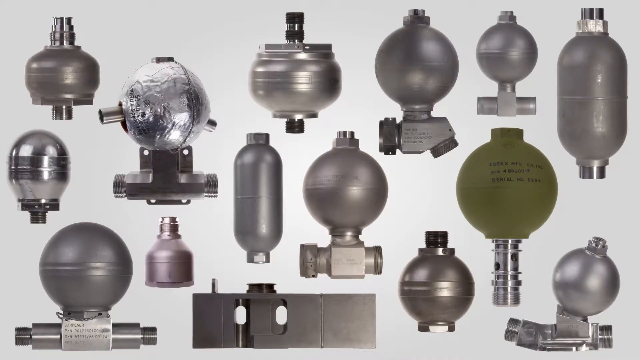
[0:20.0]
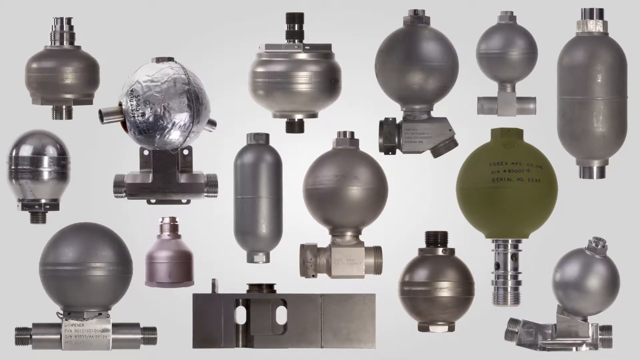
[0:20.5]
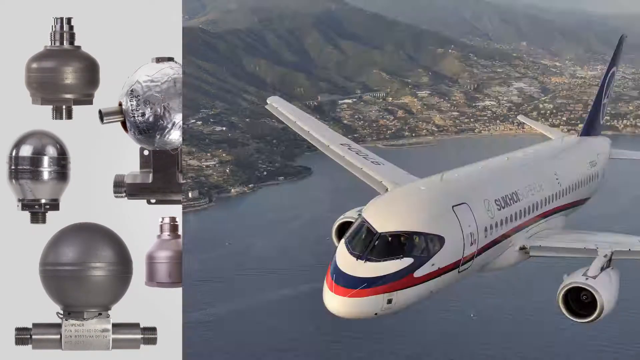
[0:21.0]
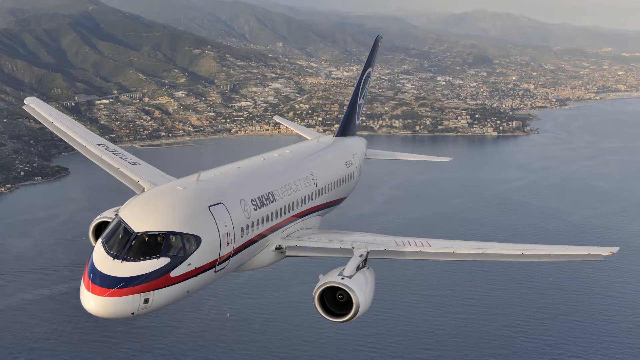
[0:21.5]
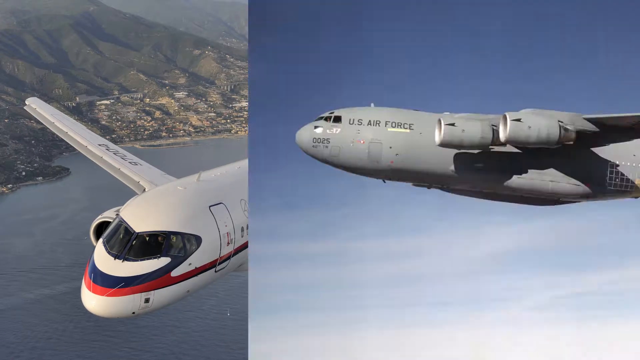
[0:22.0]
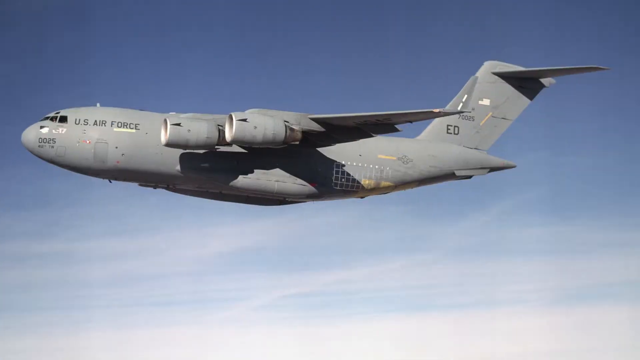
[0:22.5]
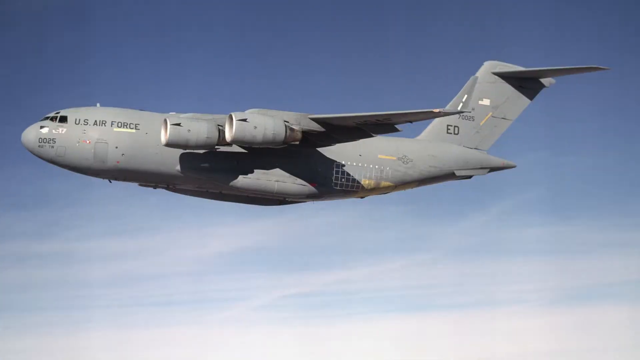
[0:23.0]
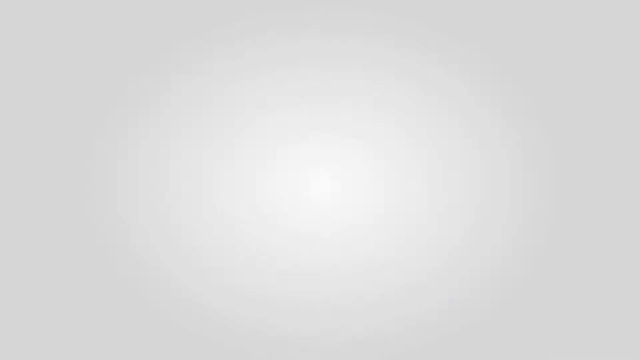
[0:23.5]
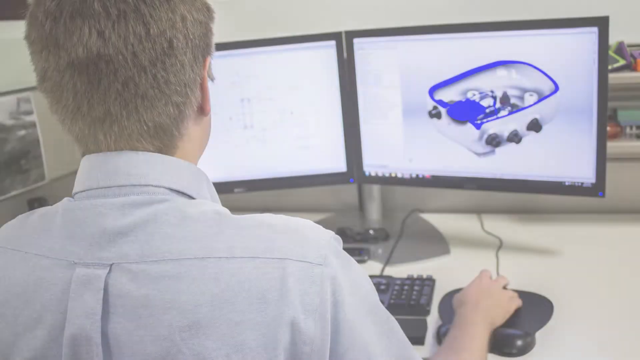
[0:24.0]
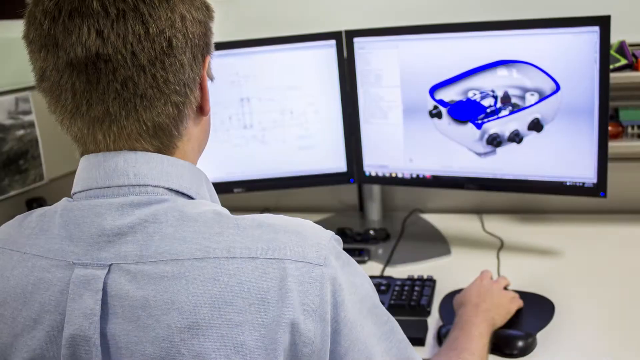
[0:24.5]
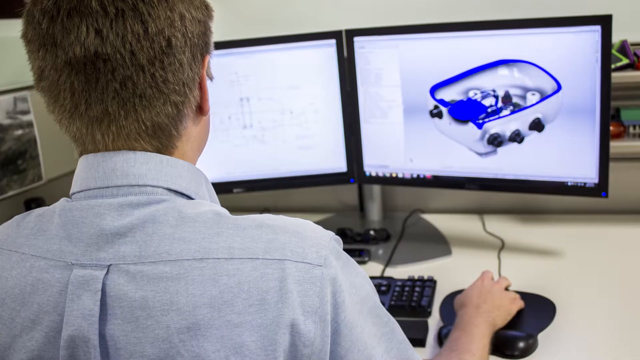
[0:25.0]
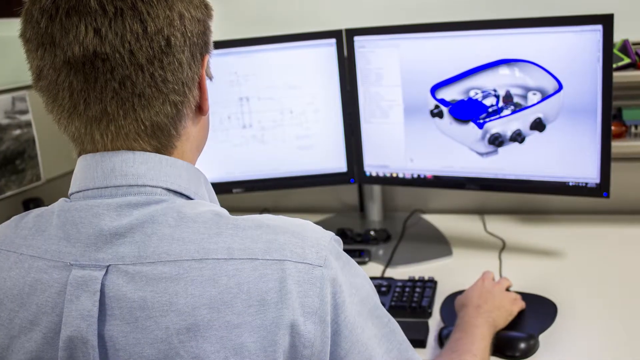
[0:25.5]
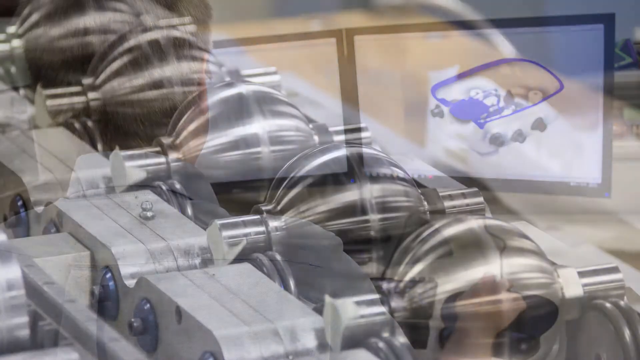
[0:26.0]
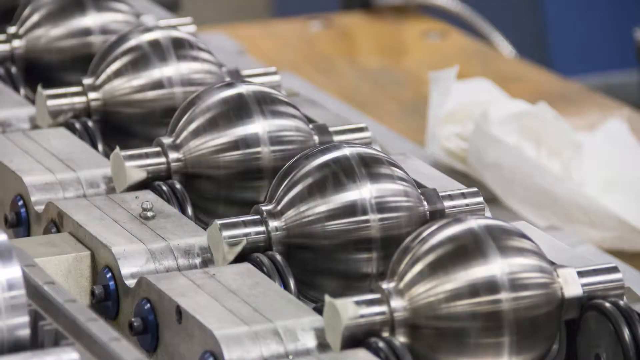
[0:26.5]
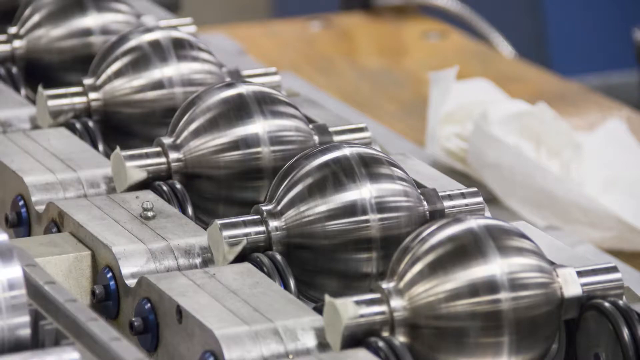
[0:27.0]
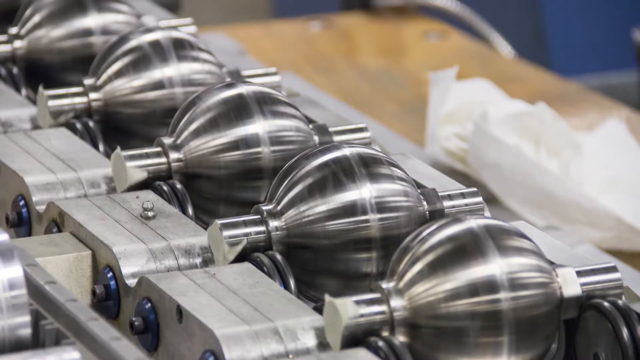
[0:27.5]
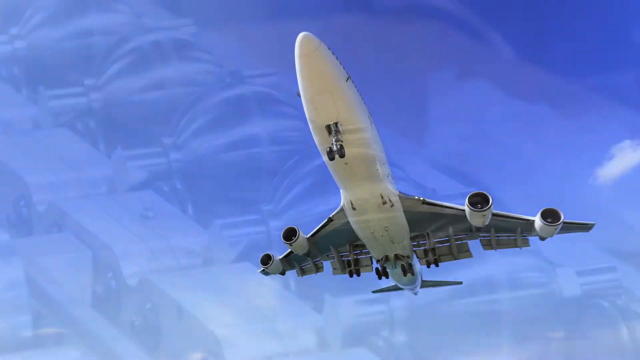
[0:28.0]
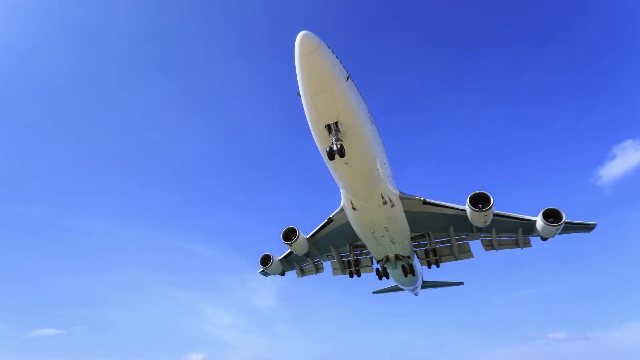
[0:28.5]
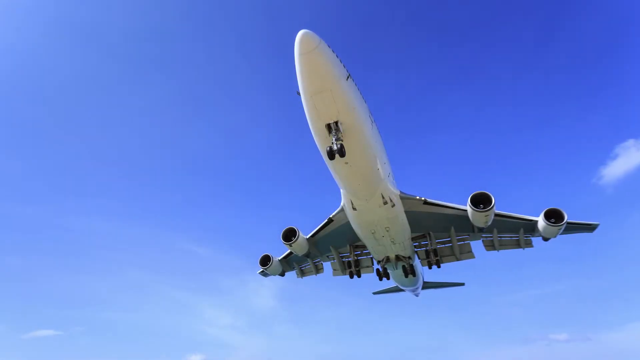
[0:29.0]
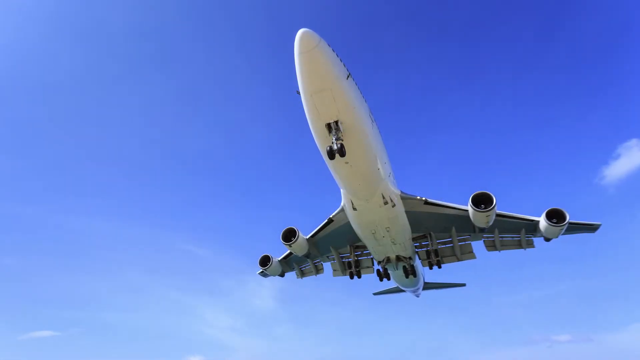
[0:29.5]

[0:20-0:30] Fifteen hydraulic pulsation dampeners are shown. Very quick clips of photos of different airplanes follow, including a big gray U.S. Air Force plane flying in the daytime. A man is seen only from the back; he has brown hair and a light blue shirt, and his right hand uses a mouse to work on a computer that displays a photo of a white and blue object. The hydraulic pulsation dampeners appear, silver and very cylindrical. Then the underside of a plane flying in a blue sky is shown, then the dampeners again, then a plane flying over a lake and beside mountains, the U.S. Air Force plane again, the man on the computer again, and the dampeners. This sequence of pictures repeats over and over: the plane's underside in a blue sky, the dampeners, a plane flying near a lake, the U.S. Air Force plane, the man on the computer, and the dampeners.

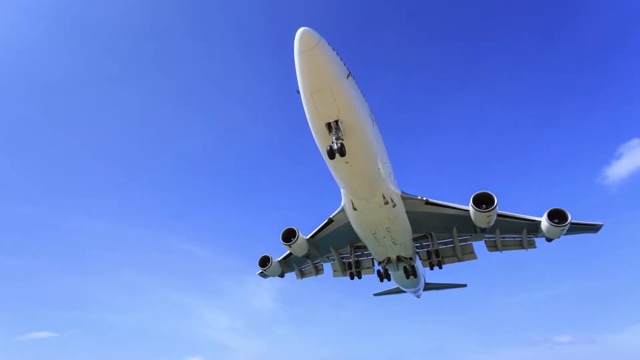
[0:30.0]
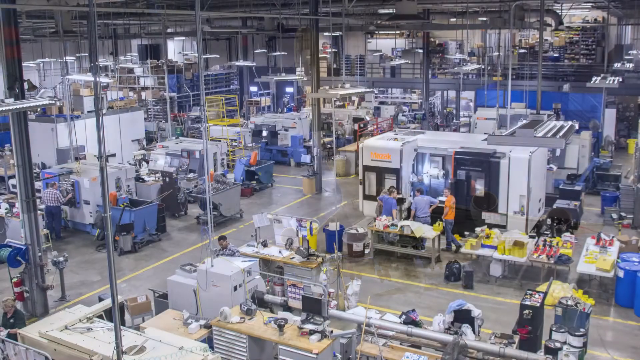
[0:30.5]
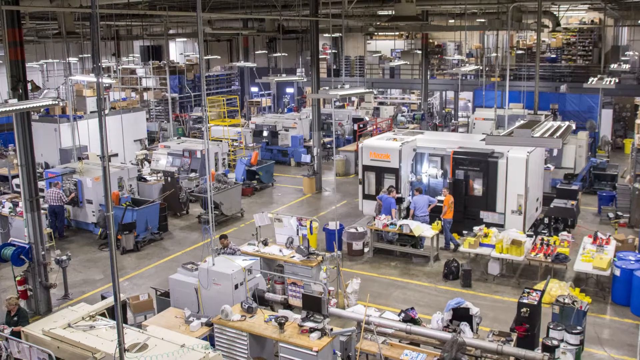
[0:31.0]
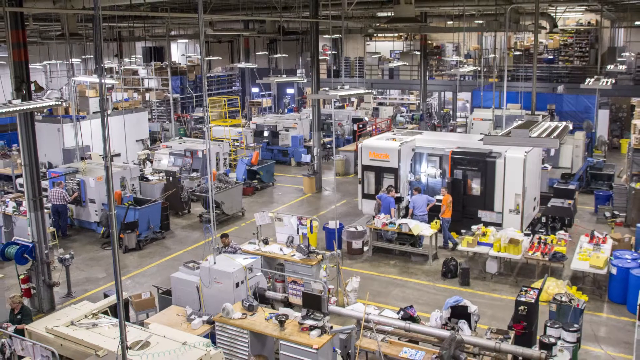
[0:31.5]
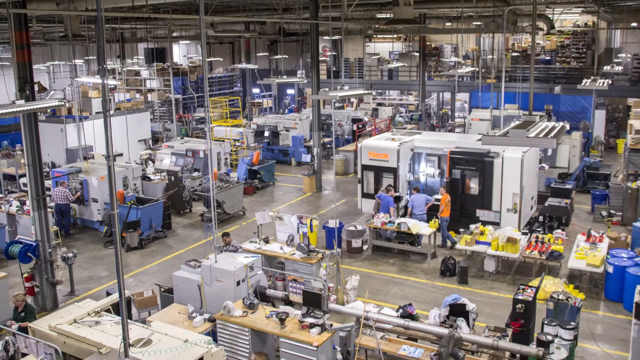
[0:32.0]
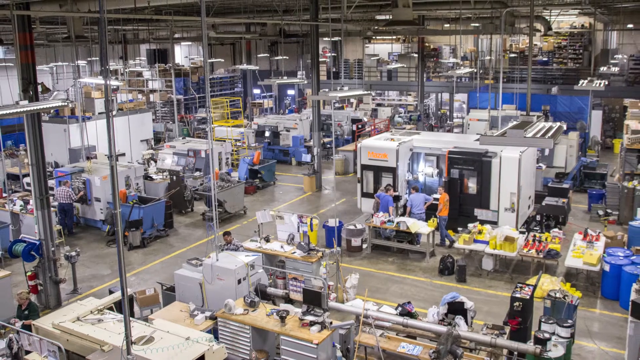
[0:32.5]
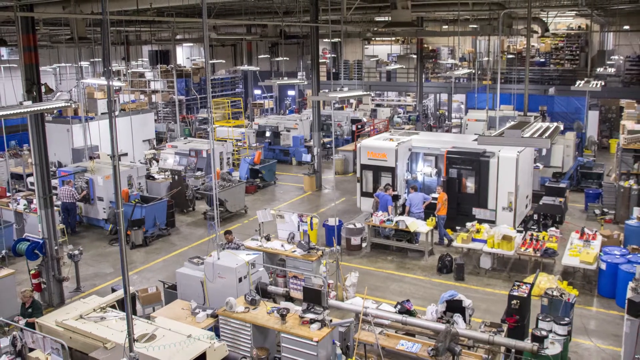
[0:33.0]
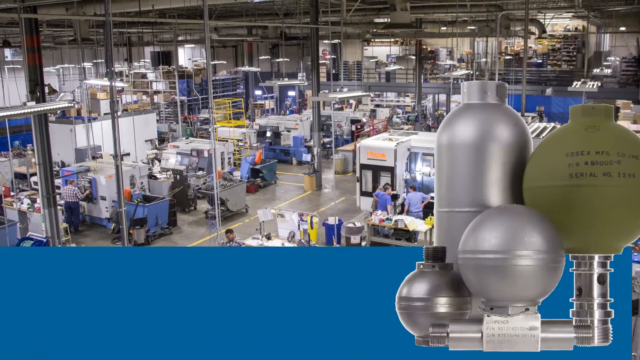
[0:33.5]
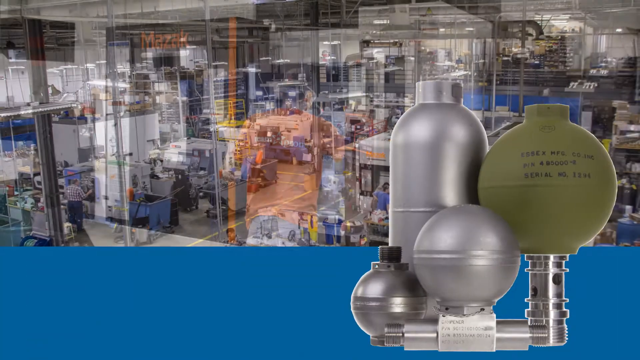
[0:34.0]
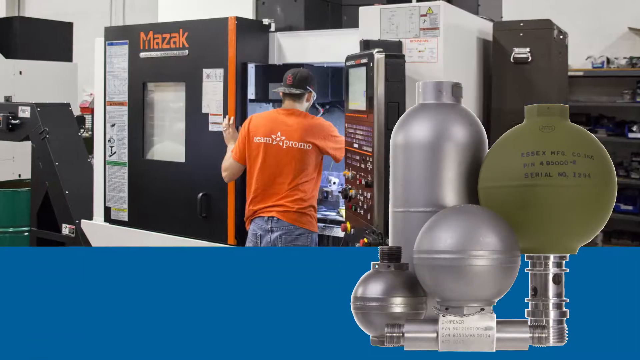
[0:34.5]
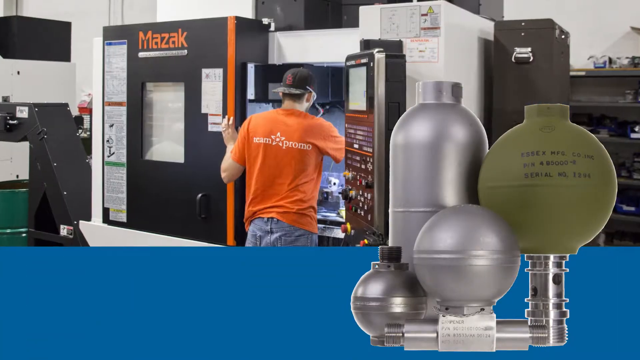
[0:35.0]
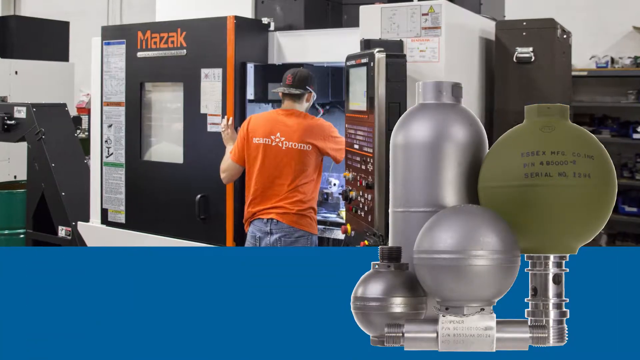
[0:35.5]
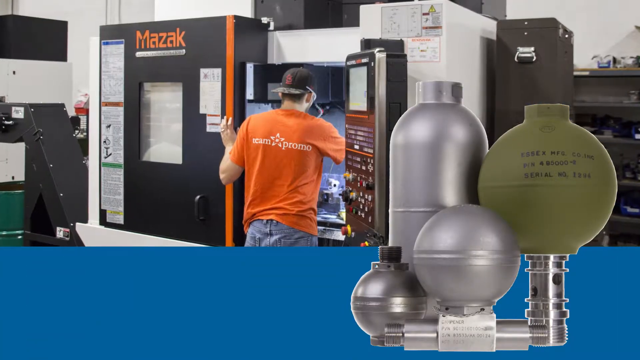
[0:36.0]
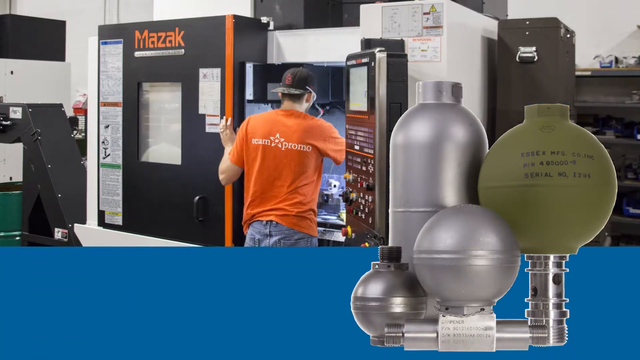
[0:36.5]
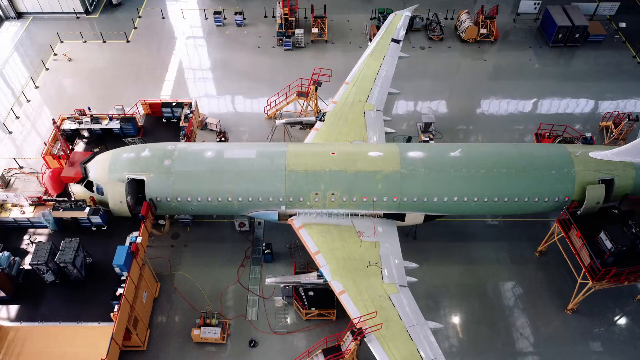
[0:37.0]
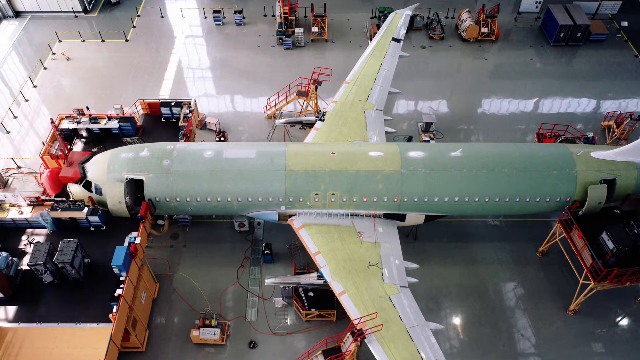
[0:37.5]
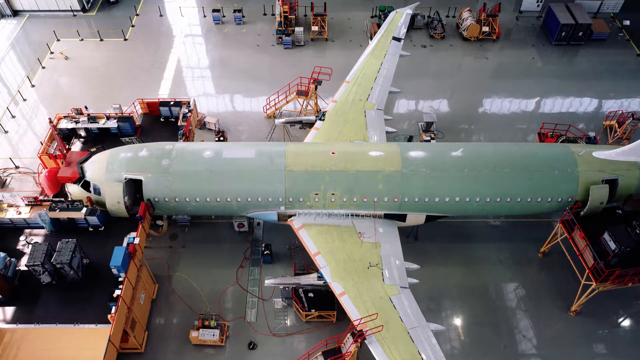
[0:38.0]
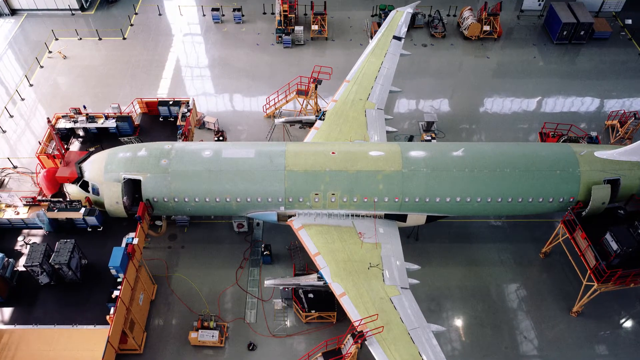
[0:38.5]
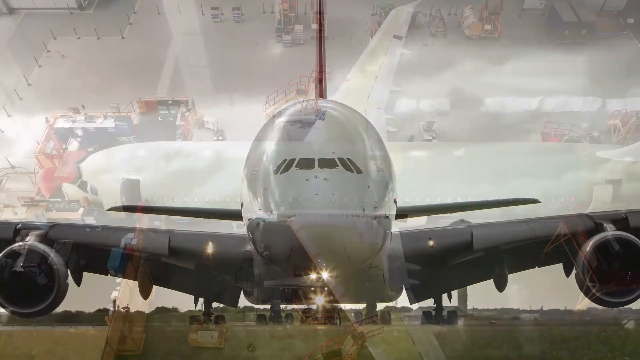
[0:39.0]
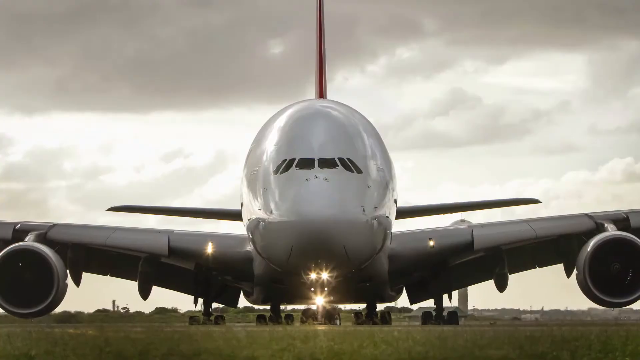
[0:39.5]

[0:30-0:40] The underside of a plane flies in the daytime sky, and people work in a big warehouse or factory. Hydraulic pulsation dampeners are shown; one is a military green and the others are a silver color. A man in an orange shirt with a black cap on backwards looks into something with a door, and the word "Mazak" appears. A large airplane is being built in the warehouse. Then the front of an airplane is shown against a cloudy sky, followed by the underside of an airplane flying in the daytime, a factory with a man looking into some sort of storage thing, and an airplane being built.